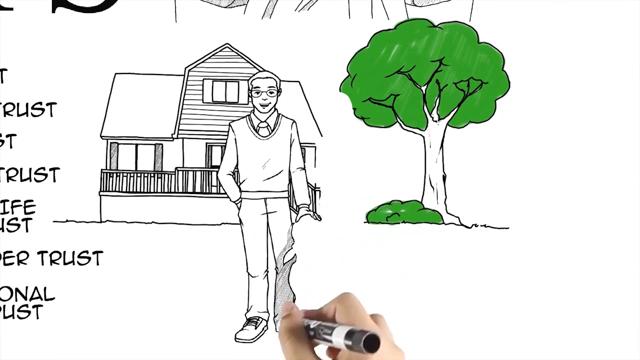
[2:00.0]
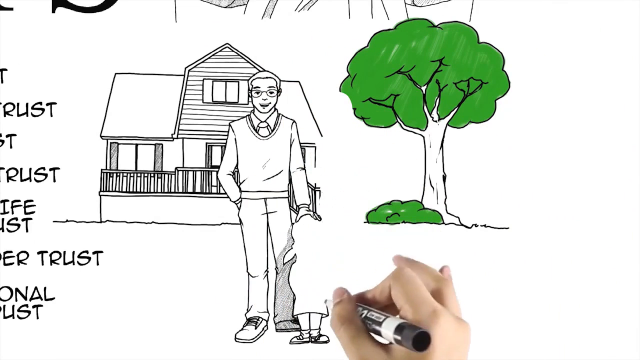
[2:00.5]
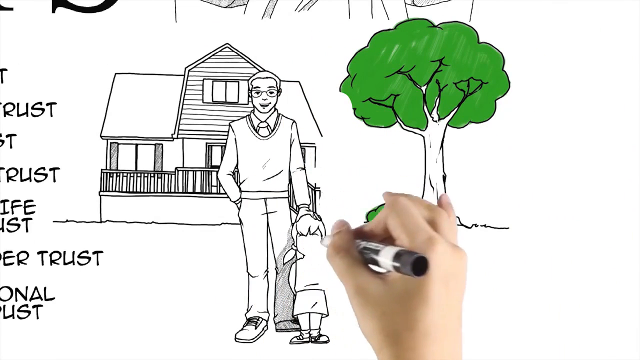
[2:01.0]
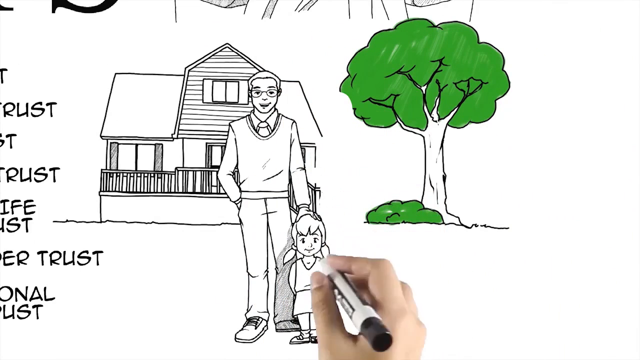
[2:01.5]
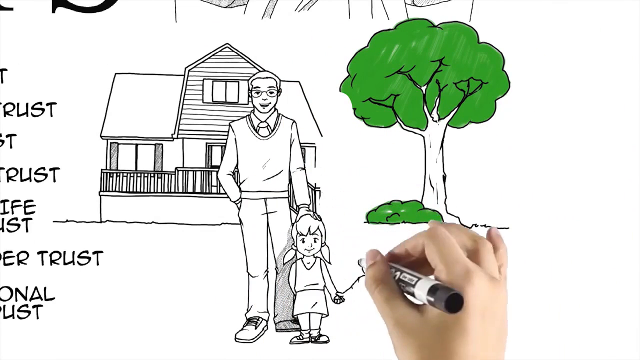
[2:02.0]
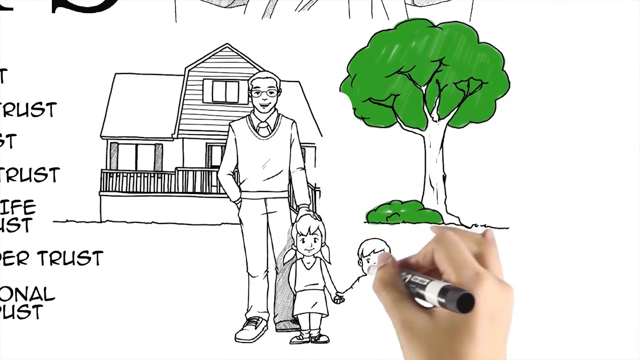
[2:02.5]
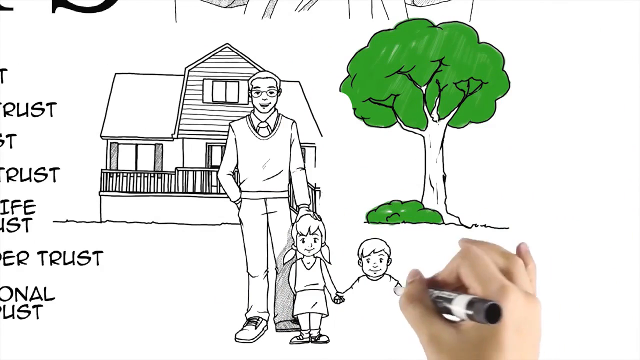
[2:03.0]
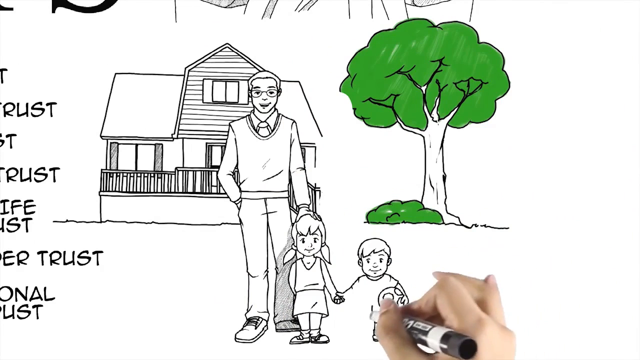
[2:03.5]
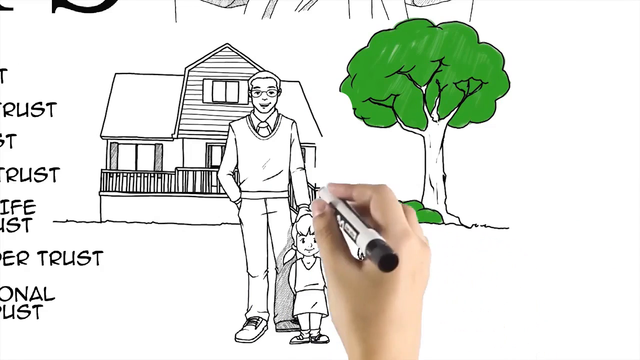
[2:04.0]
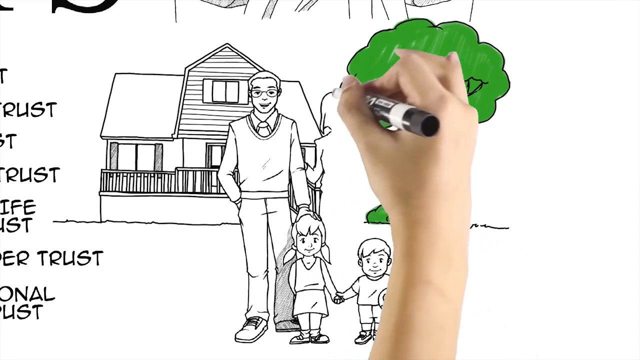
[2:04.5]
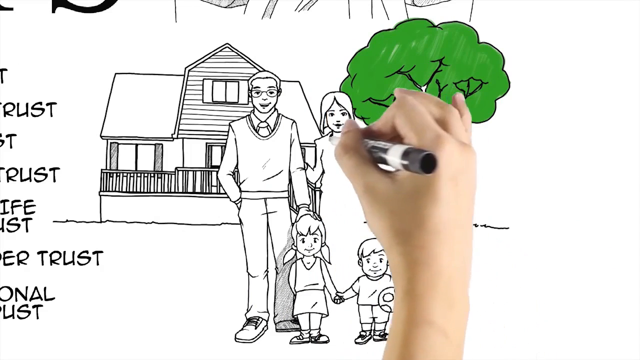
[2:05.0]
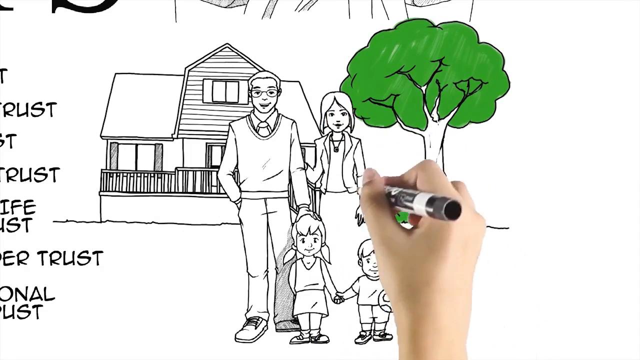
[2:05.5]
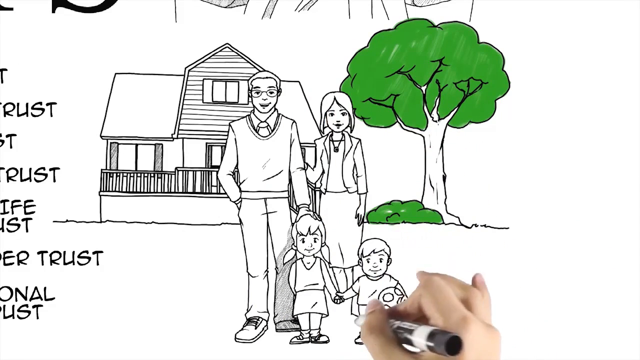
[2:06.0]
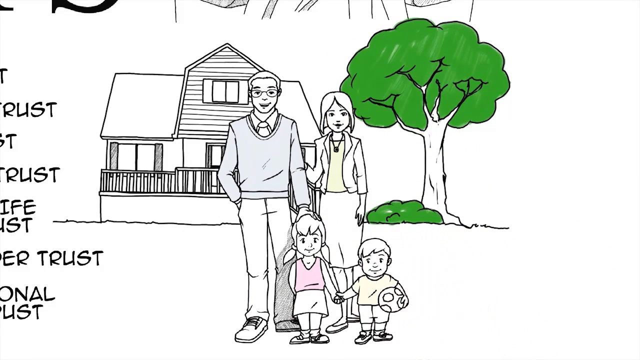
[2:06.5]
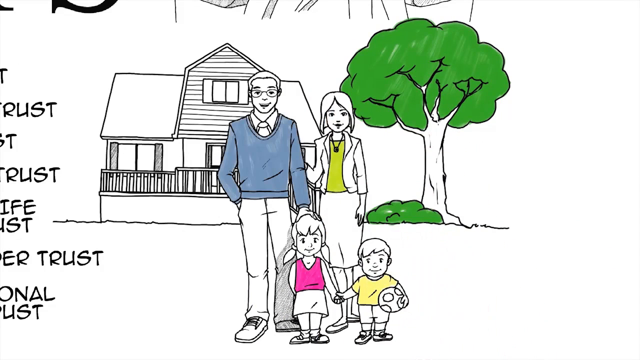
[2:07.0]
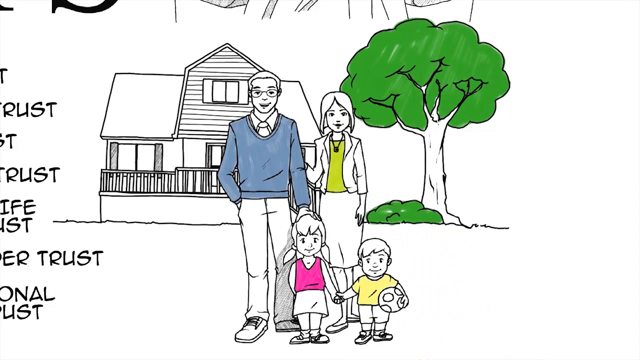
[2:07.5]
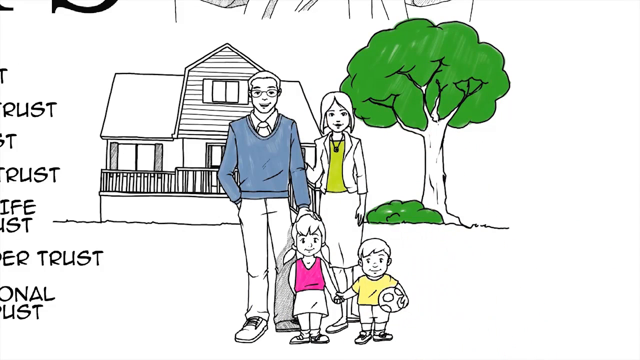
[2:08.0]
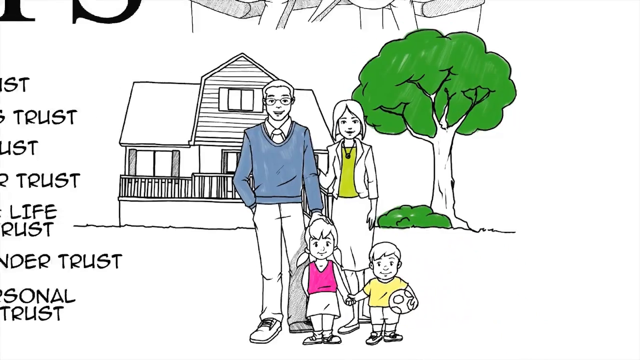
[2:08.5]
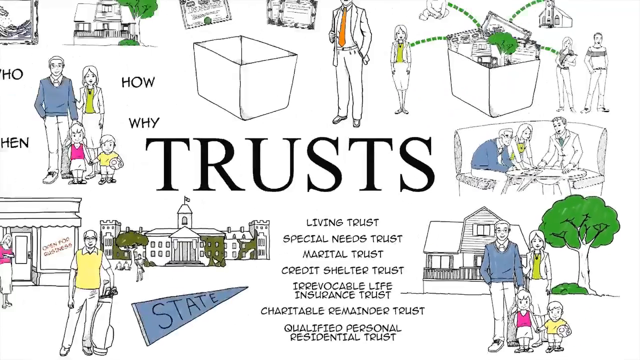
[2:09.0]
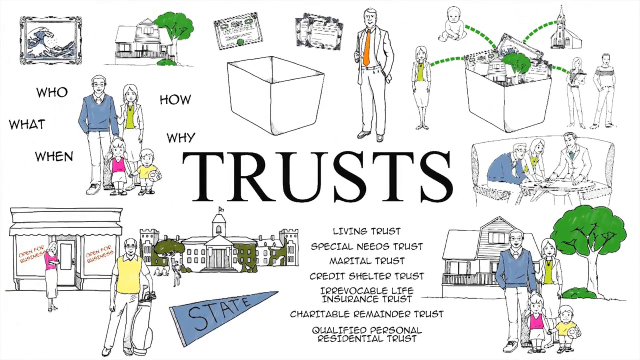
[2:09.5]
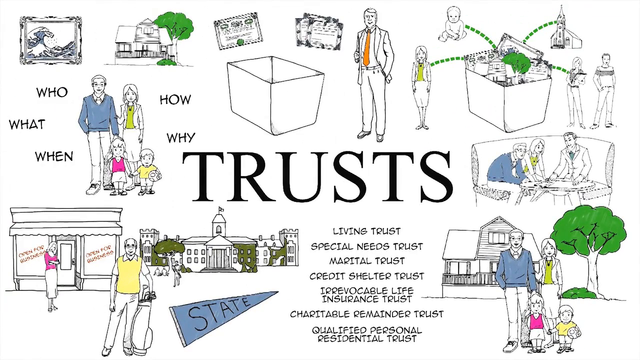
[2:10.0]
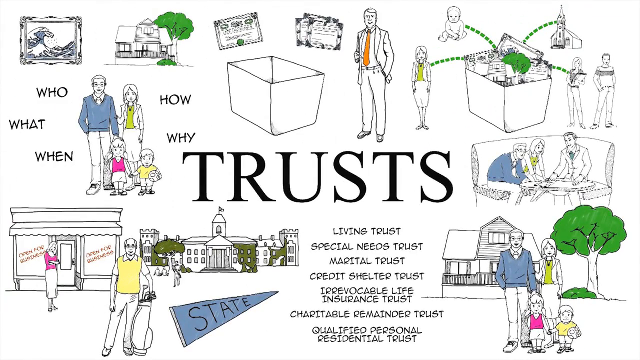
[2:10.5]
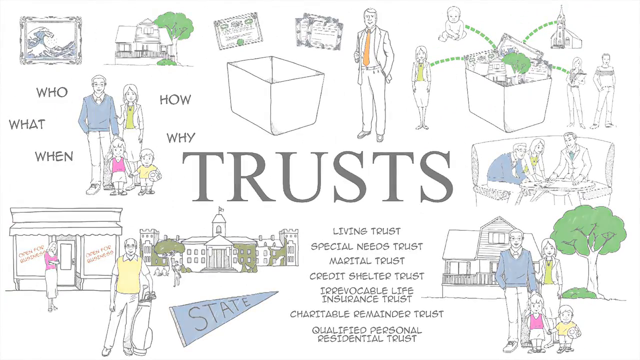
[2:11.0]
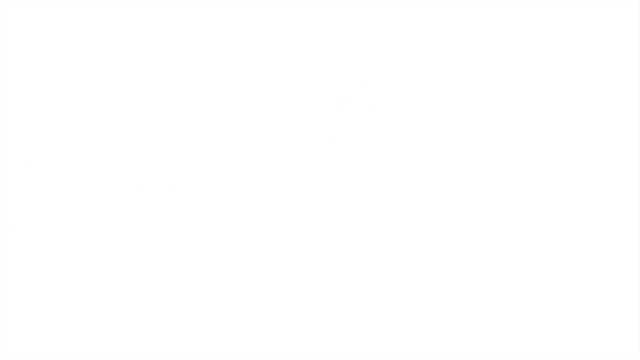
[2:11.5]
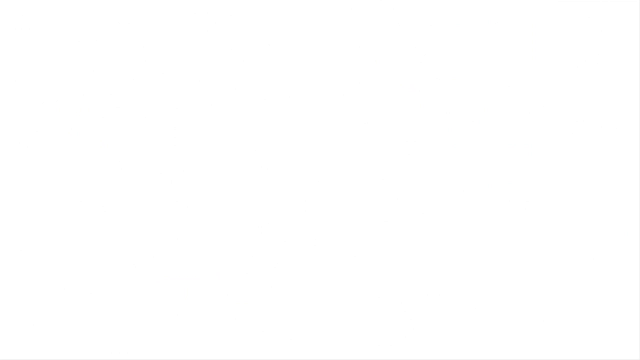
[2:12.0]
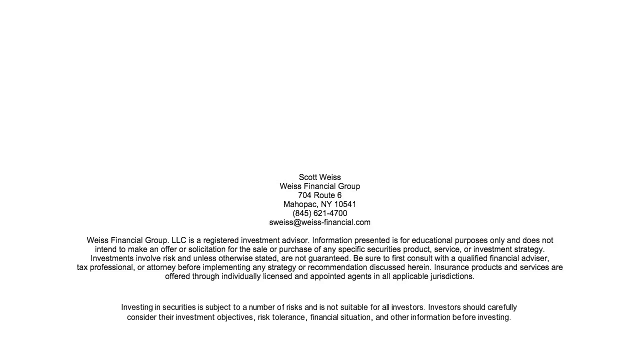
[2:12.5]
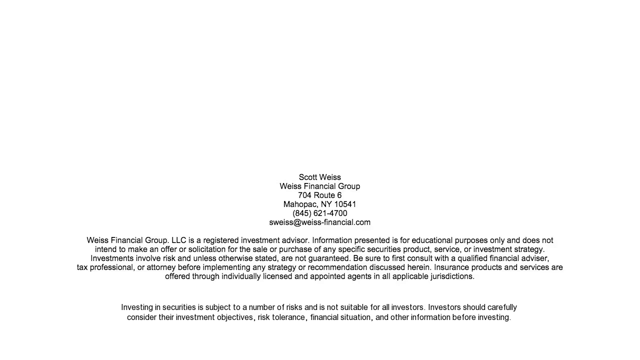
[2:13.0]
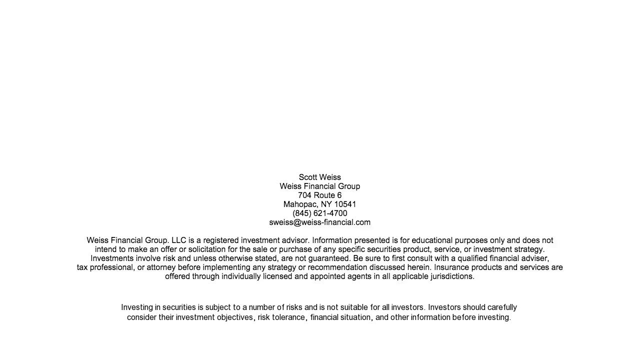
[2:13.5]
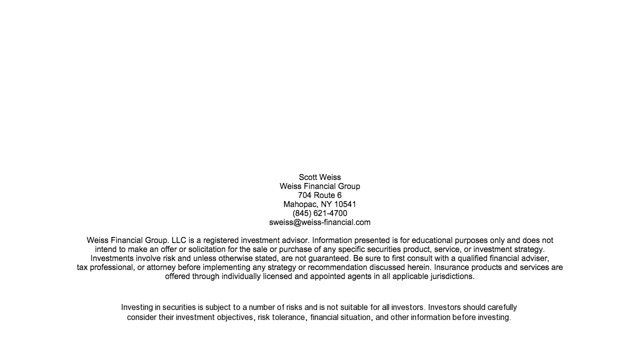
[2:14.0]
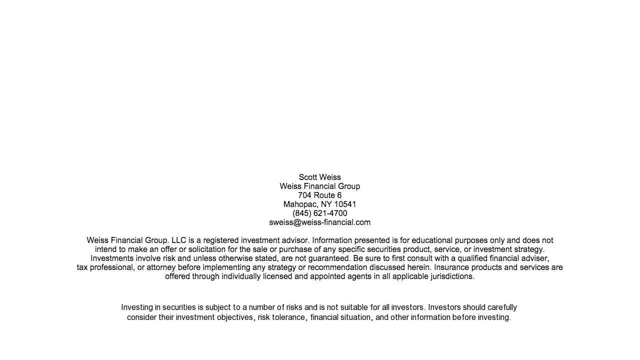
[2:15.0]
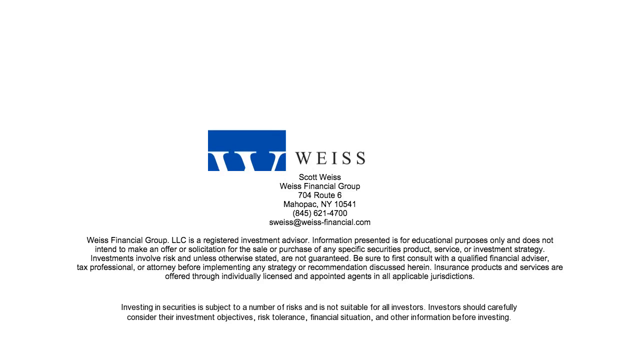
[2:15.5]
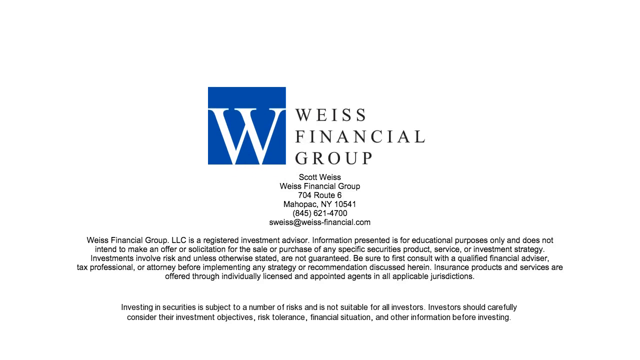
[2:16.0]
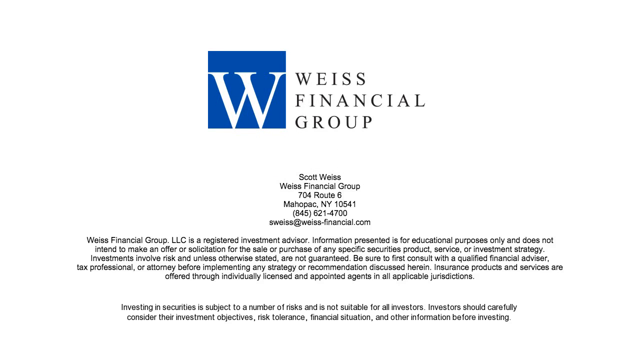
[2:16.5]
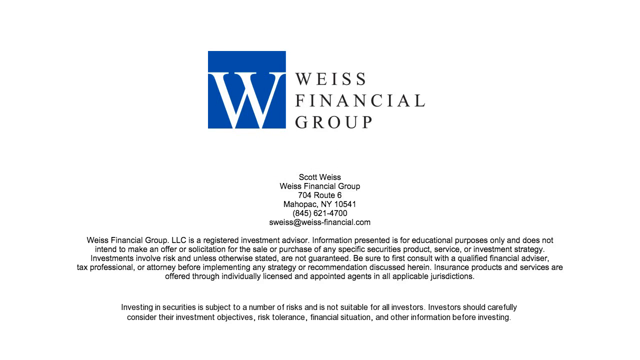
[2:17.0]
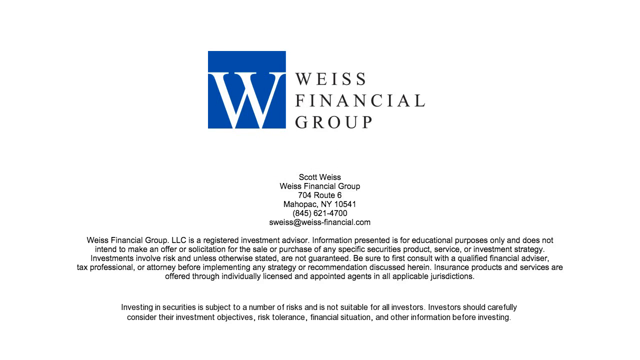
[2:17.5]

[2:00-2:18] A man is standing in front of a wood-panelled house with a fence outside. To the right of the house is a large tree, coloured green, as is a bush at the bottom. The man has his hand on something. The pen then draws the small girl with pigtails, holding hands with an even smaller boy who has a football tucked under his left arm. A woman wearing a skirt and a top is then drawn behind. Colour is added: the small boy has a yellow t-shirt, the small girl a pink vest top, the man a blue jumper, and the woman a lime green top. The view then zooms out to show "TRUSTS" in capital letters in the centre, surrounded by all the different line drawings made by the white hand with short nails throughout, along with the list of different trusts. Some have colour, but most are just line drawings.